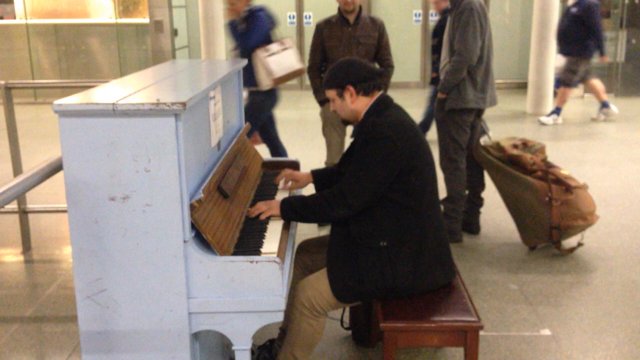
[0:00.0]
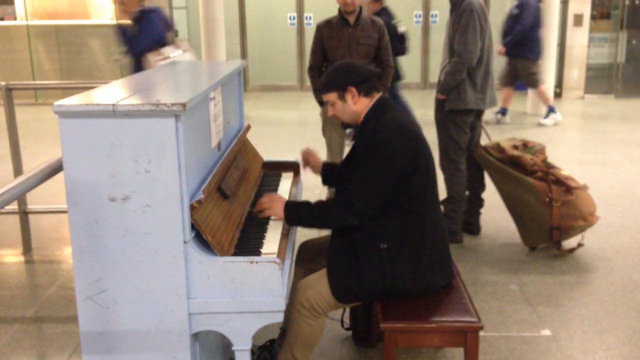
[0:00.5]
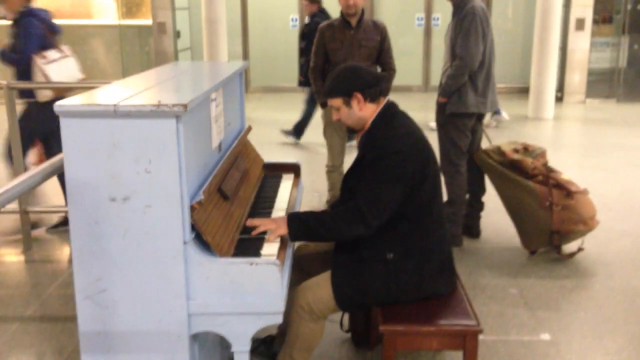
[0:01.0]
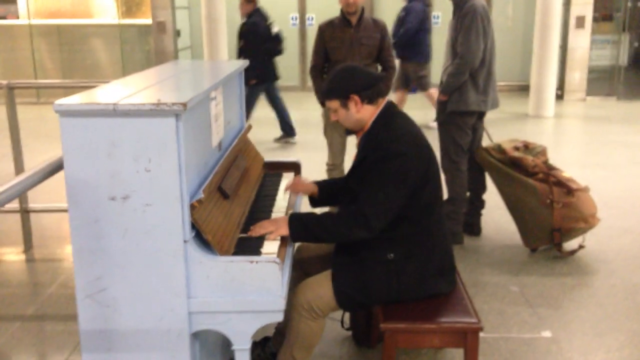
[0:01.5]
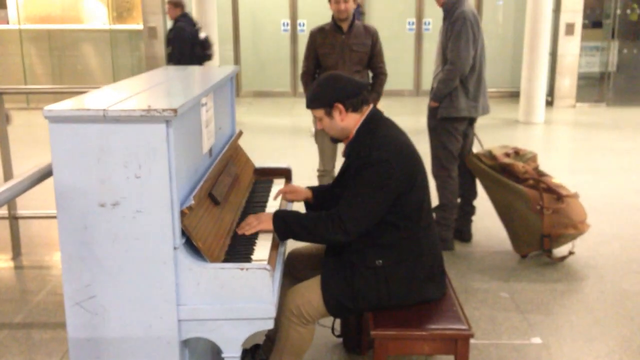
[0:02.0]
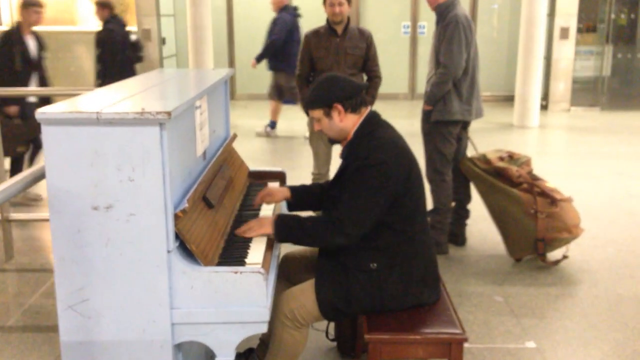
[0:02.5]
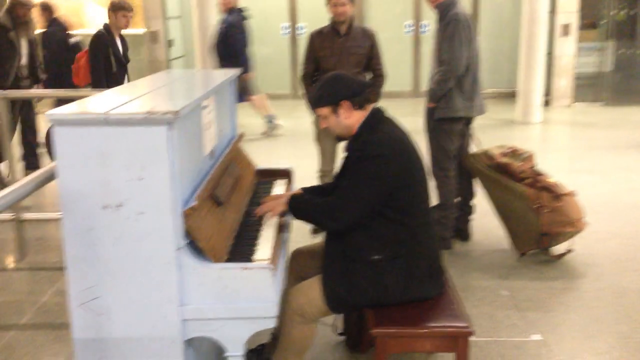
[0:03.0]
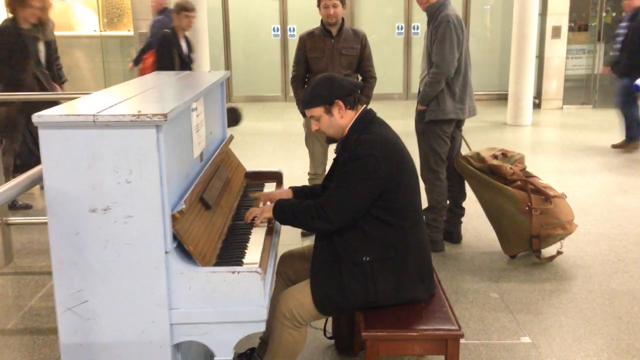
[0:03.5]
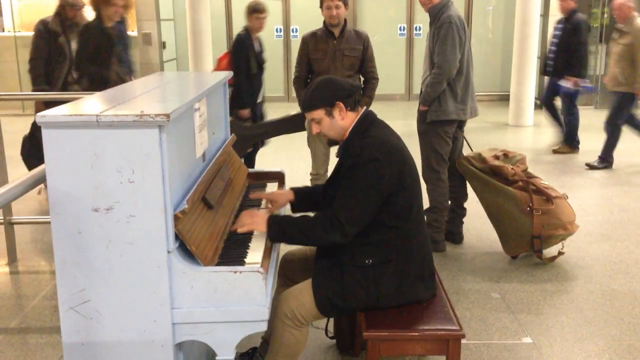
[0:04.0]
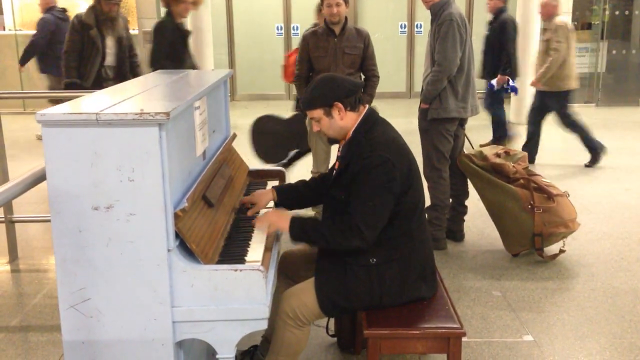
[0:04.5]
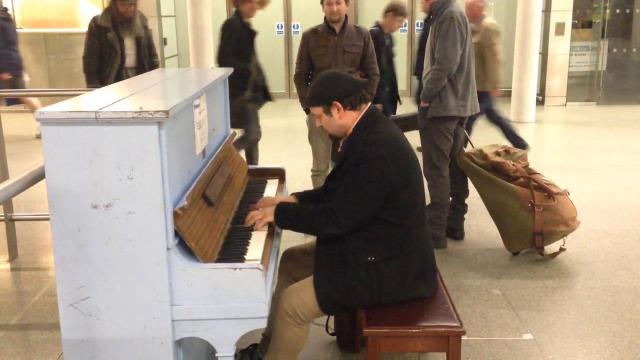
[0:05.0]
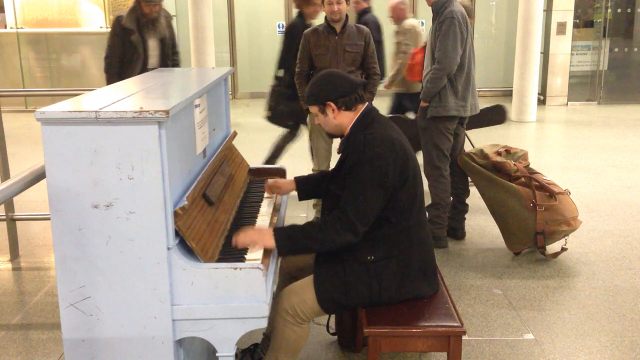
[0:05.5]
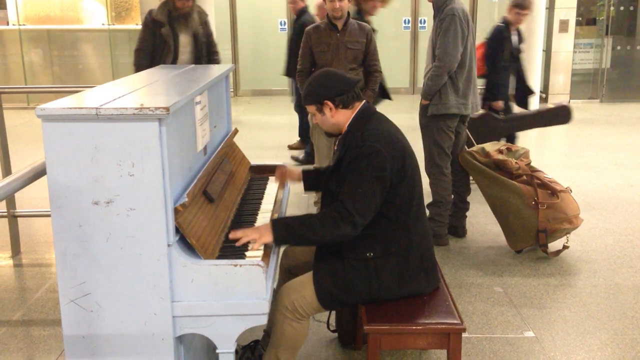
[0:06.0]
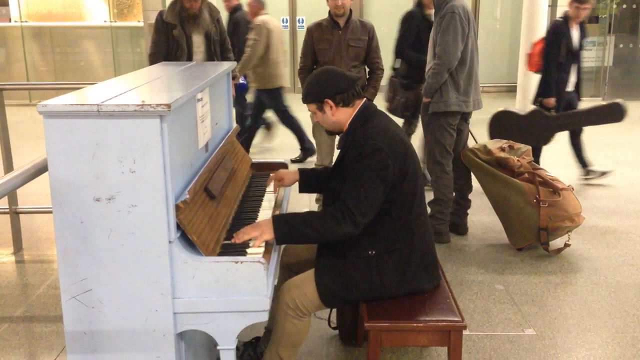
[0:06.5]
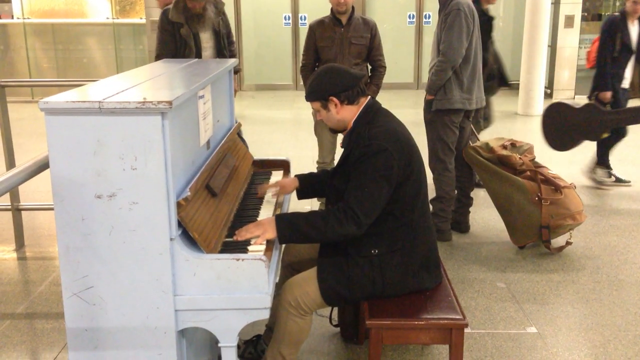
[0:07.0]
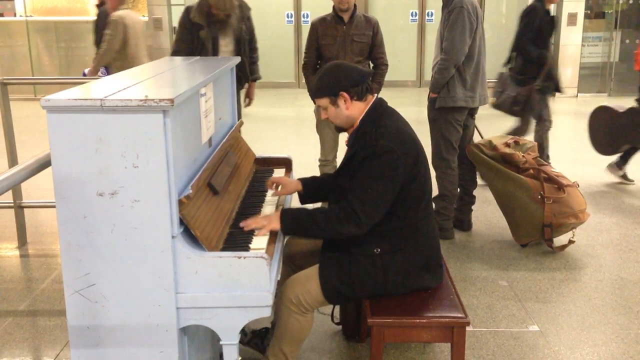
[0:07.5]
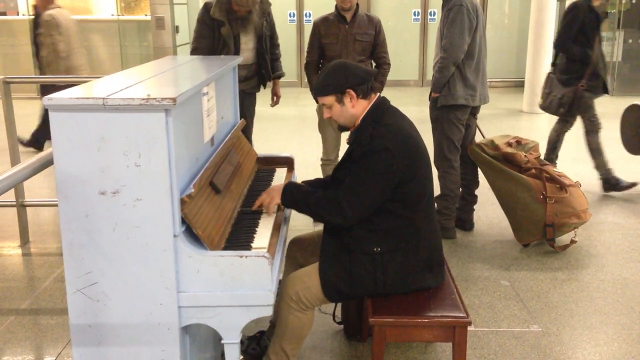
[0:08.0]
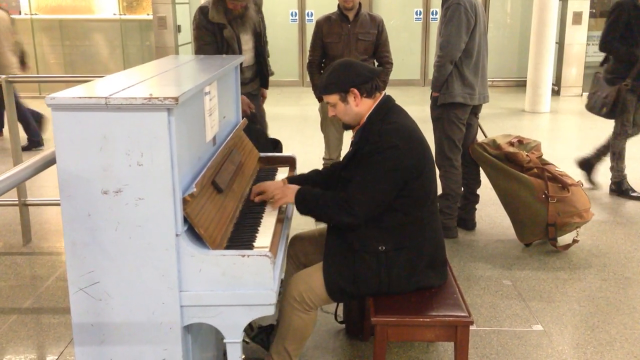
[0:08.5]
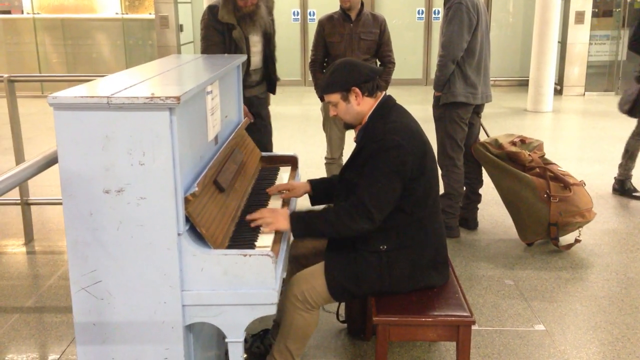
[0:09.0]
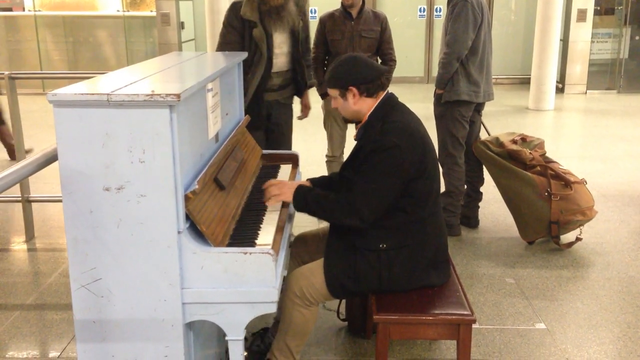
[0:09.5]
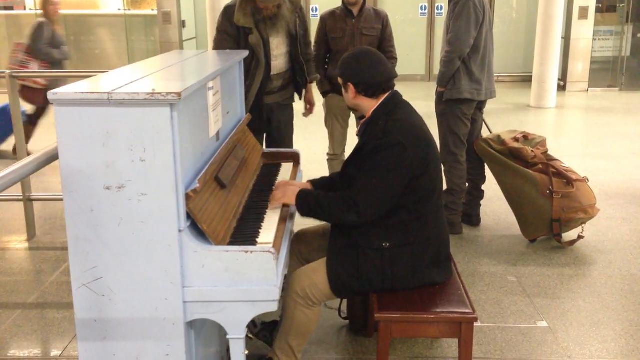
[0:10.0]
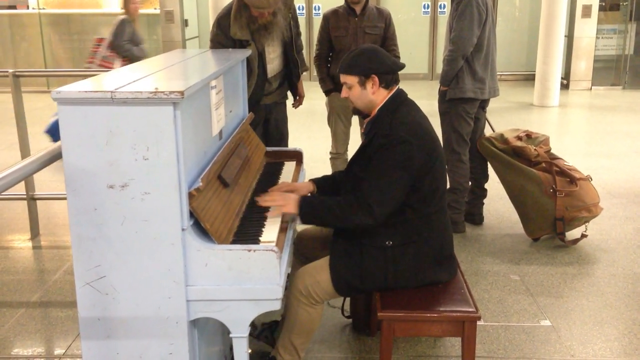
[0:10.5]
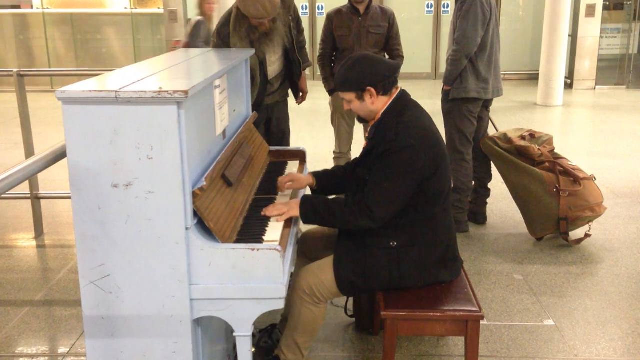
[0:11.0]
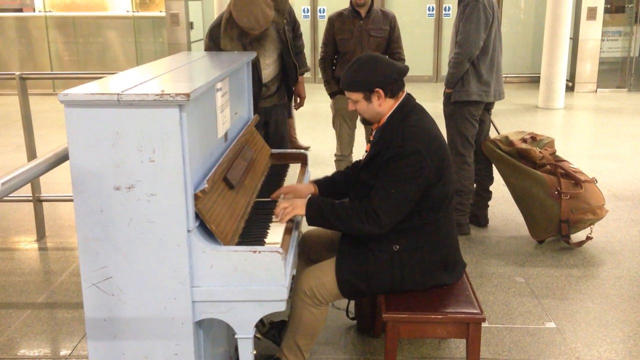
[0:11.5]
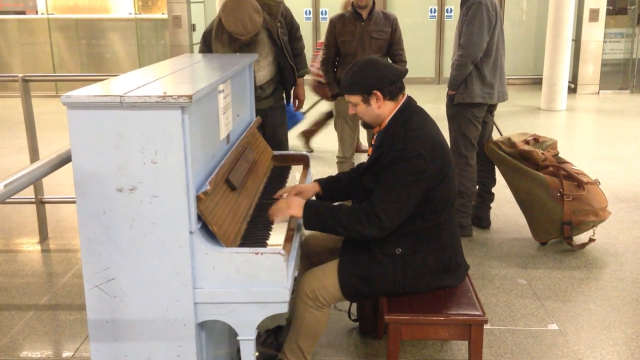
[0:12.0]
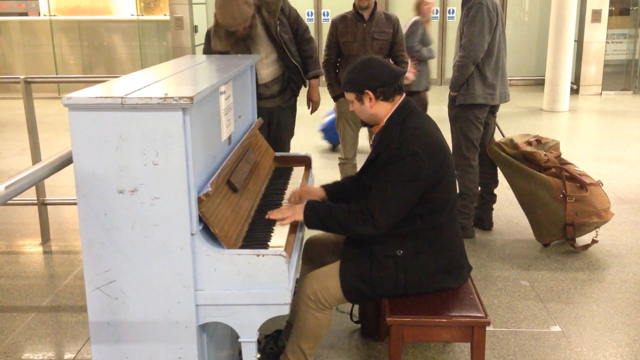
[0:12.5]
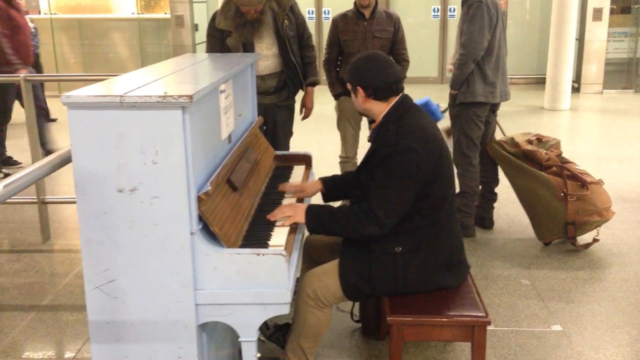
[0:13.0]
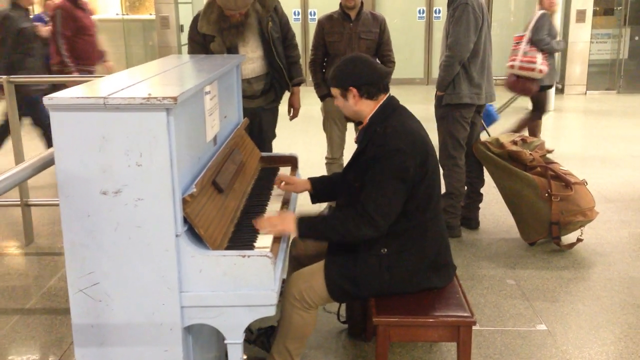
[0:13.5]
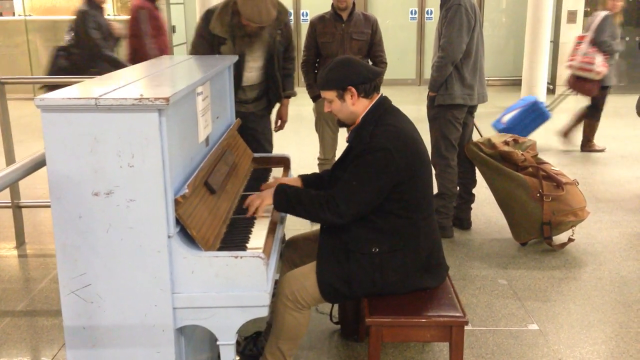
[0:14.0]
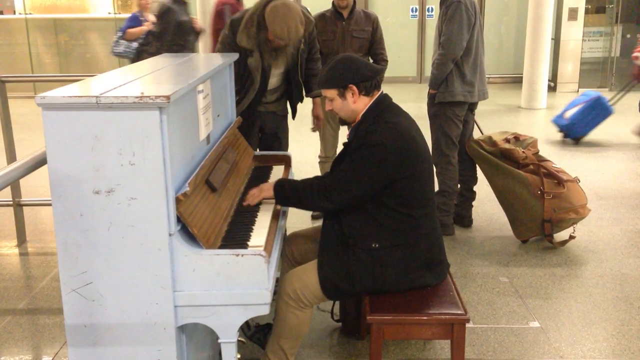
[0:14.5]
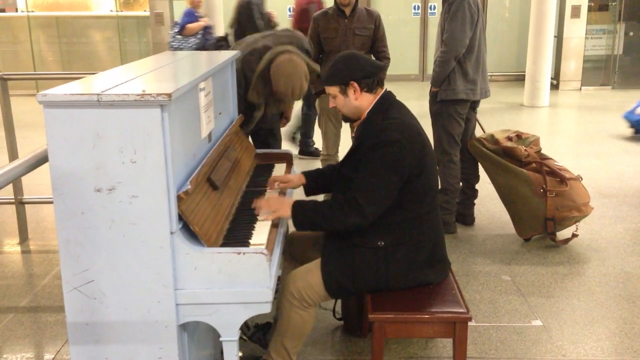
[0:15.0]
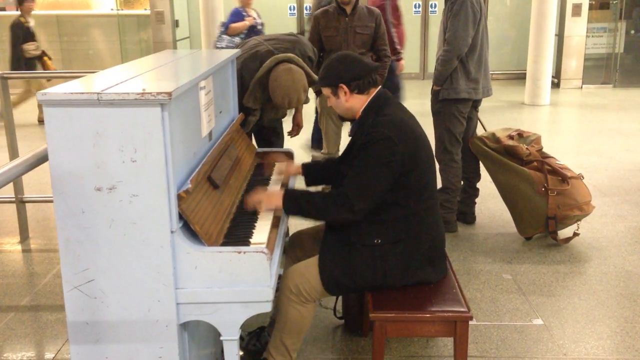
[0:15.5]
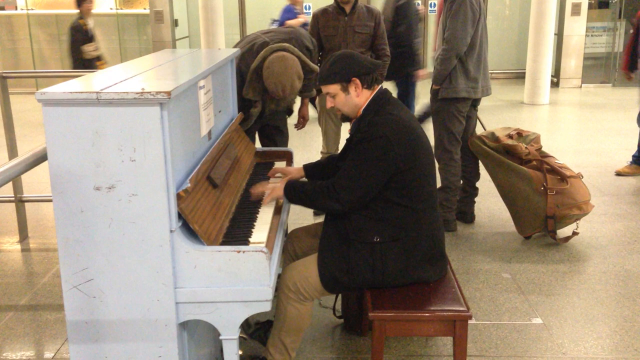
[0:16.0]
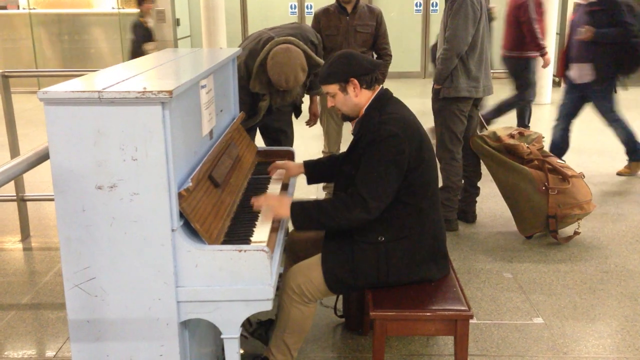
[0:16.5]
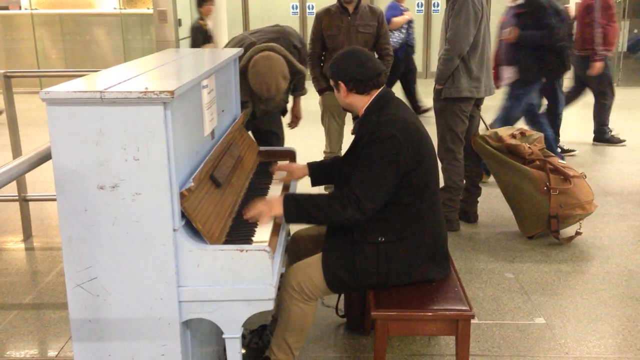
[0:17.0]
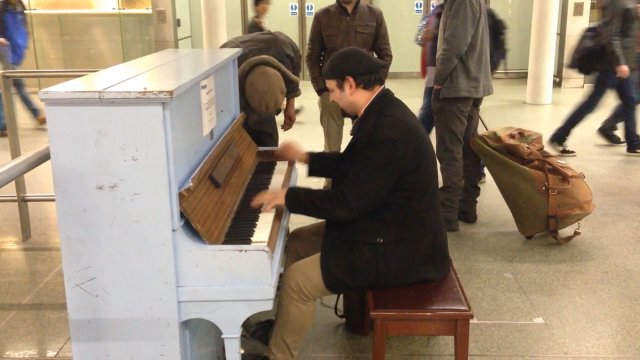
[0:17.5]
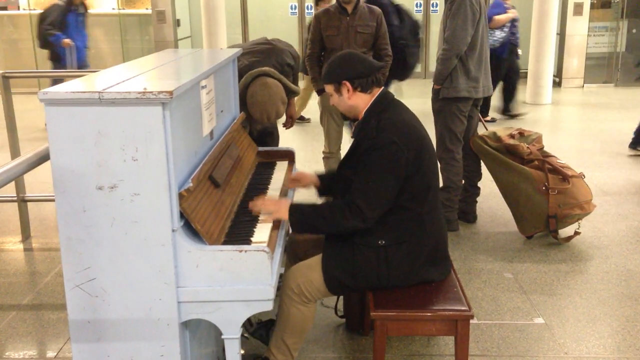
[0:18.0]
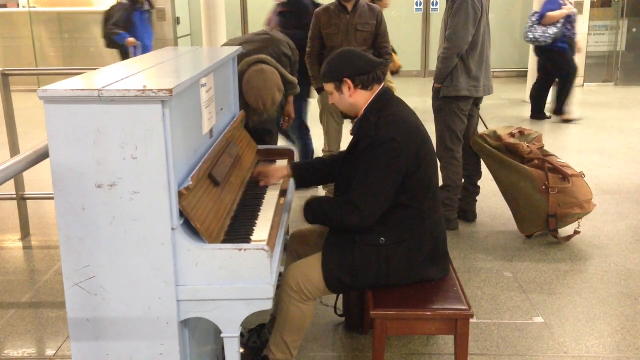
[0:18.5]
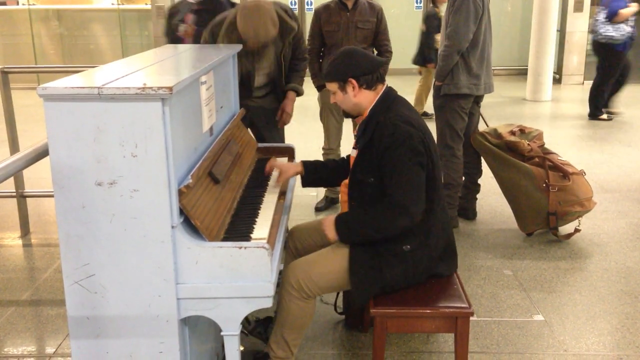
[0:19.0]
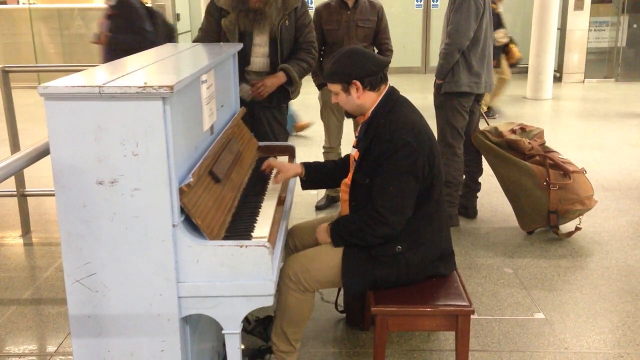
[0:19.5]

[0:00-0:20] The setting looks like it may be a mall, a bus or a subway, and it does appear to be some type of subway or bus station. A man in a black hat, black jacket and tan pants is playing a white piano. The piano is wooden and well worn, showing its age with a lot of wear and tear, as though it has apparently been there a long time. People stop by to watch him play, and someone appears to be trying to put money into something, seemingly making a donation to him for playing. There is lots of foot traffic, with many people walking back and forth. One man carrying a guitar walks by, and another man holds his pull-on luggage.